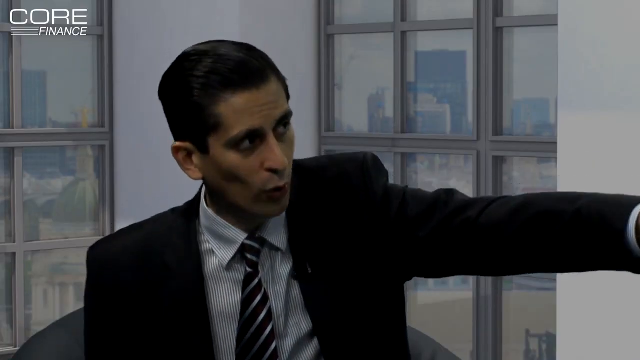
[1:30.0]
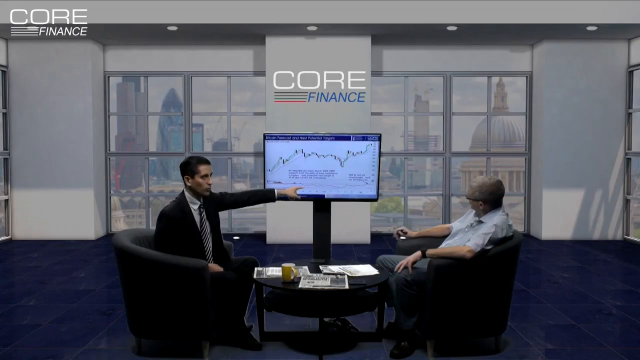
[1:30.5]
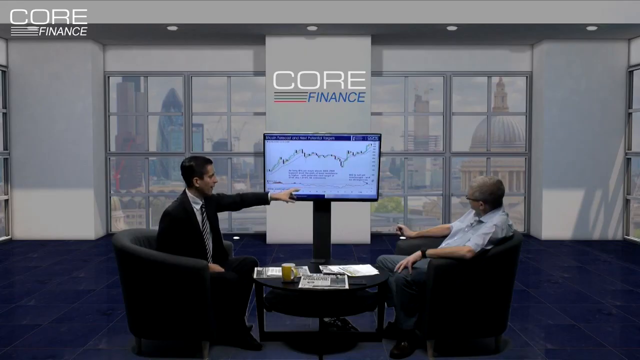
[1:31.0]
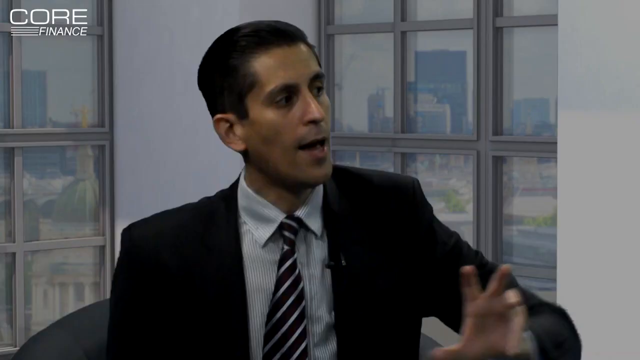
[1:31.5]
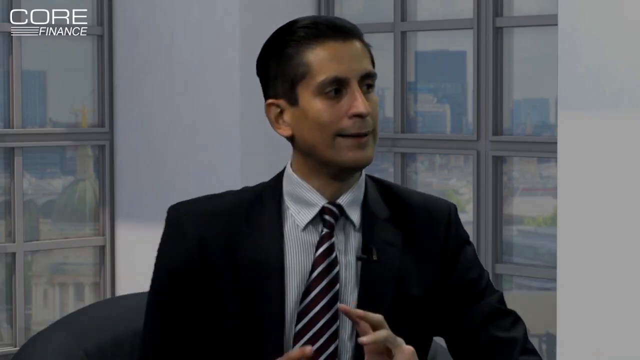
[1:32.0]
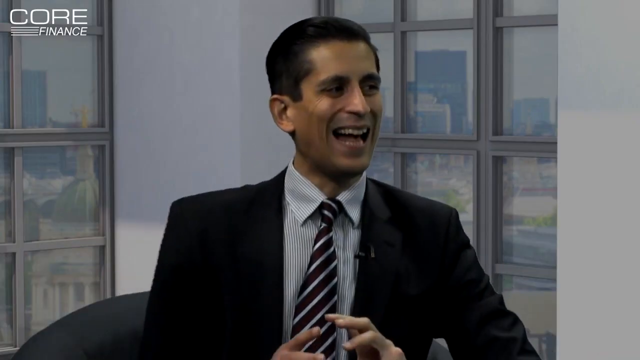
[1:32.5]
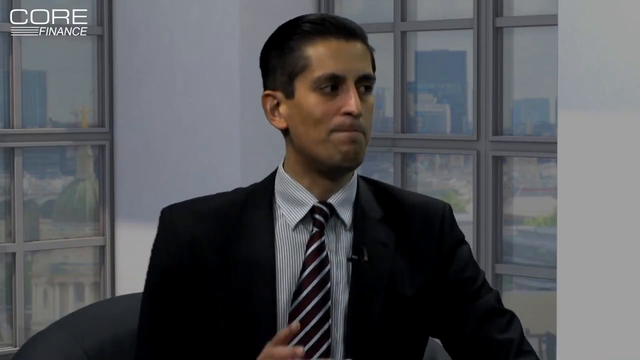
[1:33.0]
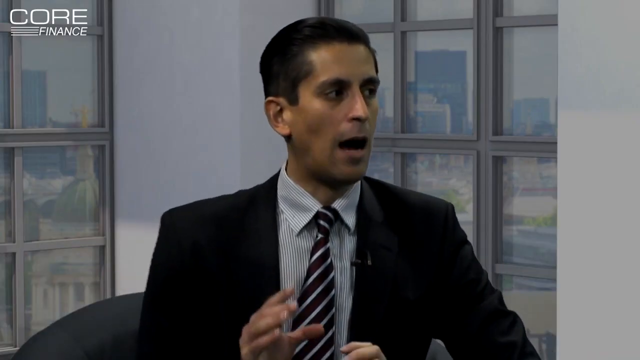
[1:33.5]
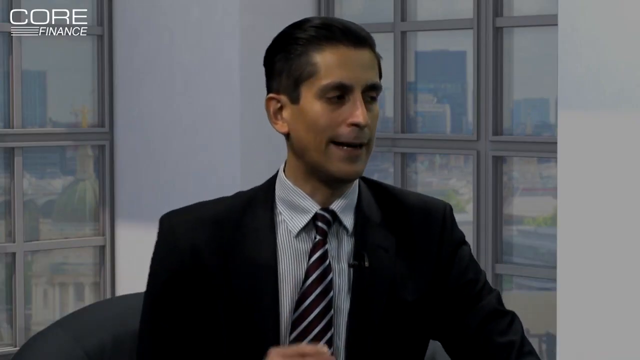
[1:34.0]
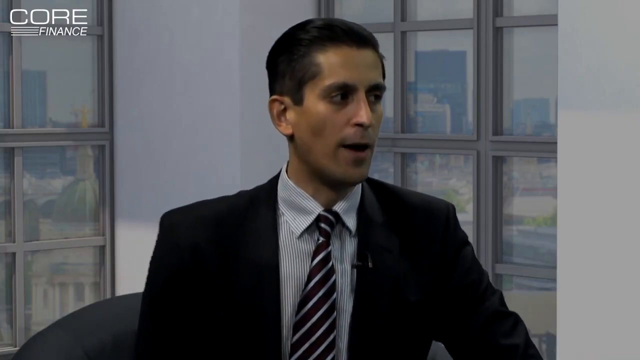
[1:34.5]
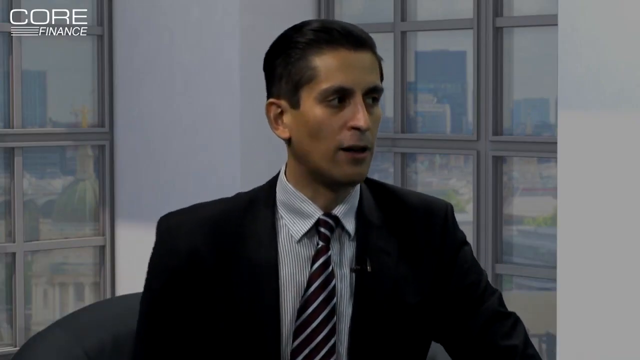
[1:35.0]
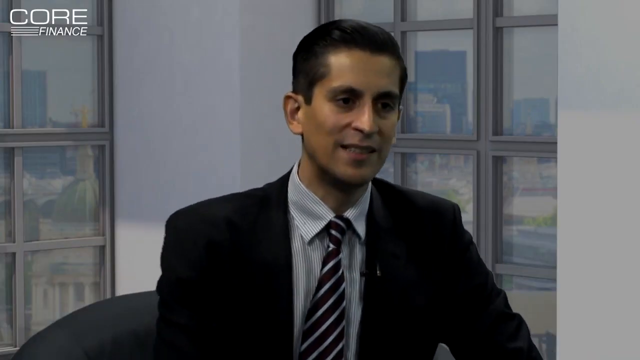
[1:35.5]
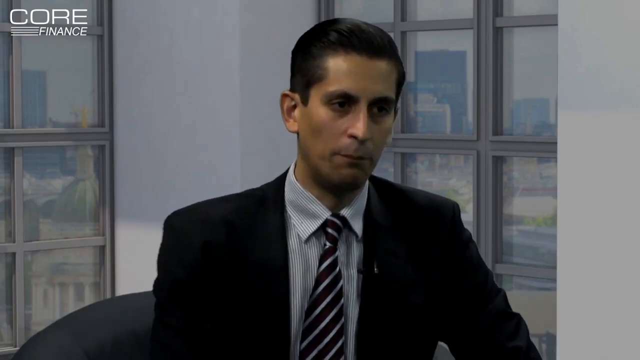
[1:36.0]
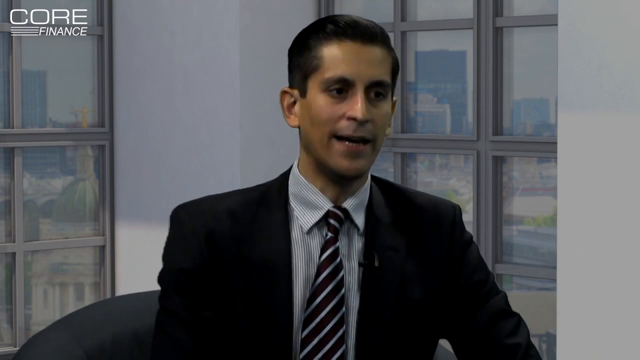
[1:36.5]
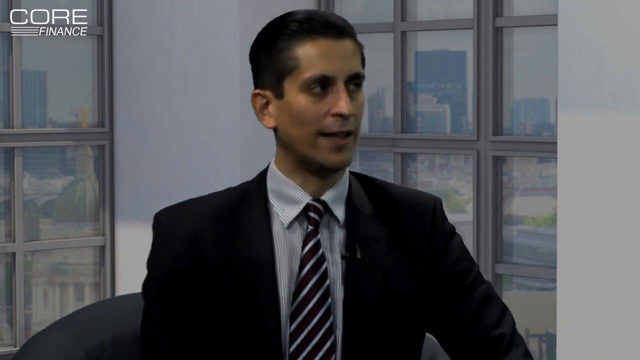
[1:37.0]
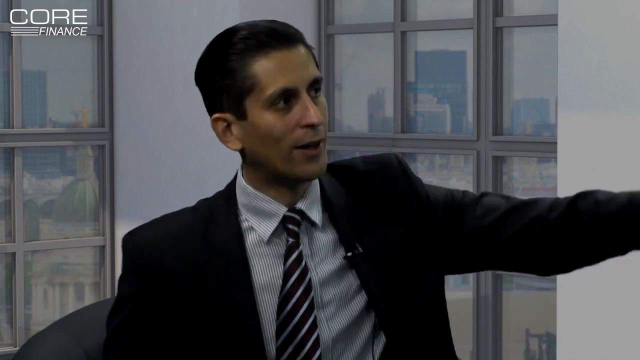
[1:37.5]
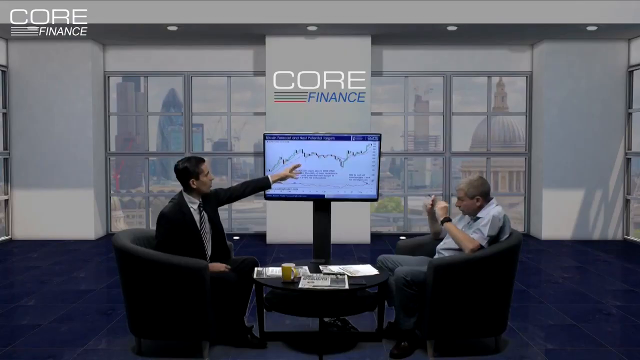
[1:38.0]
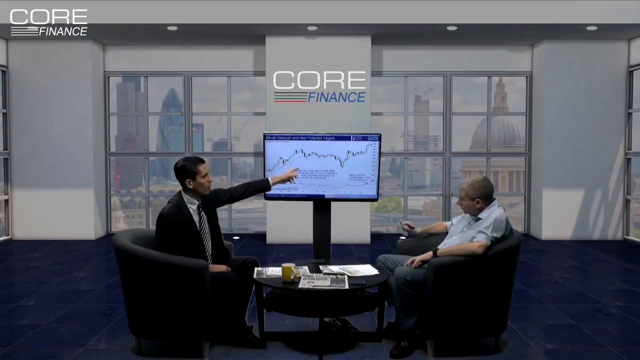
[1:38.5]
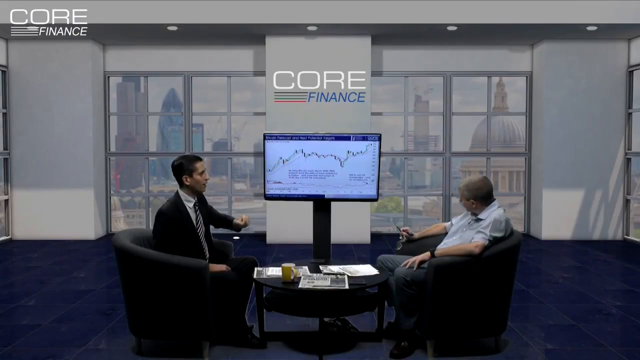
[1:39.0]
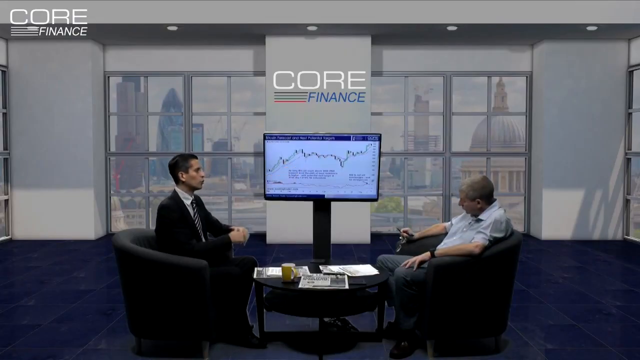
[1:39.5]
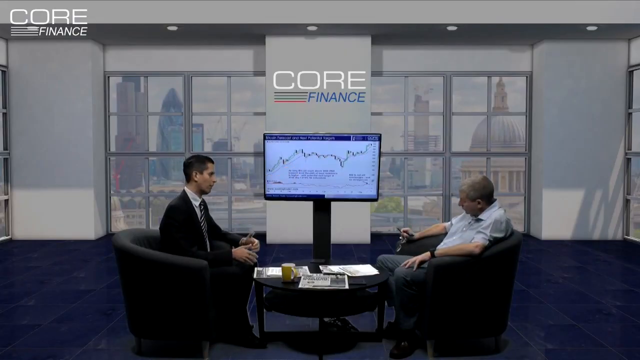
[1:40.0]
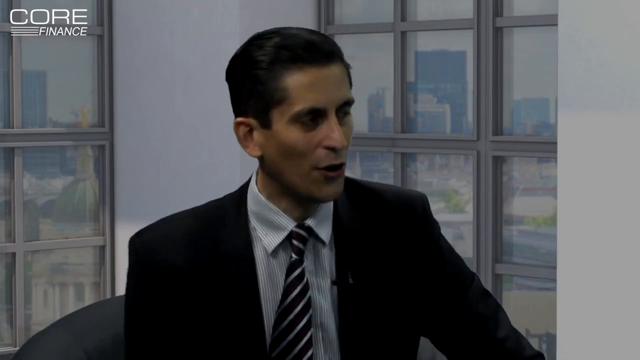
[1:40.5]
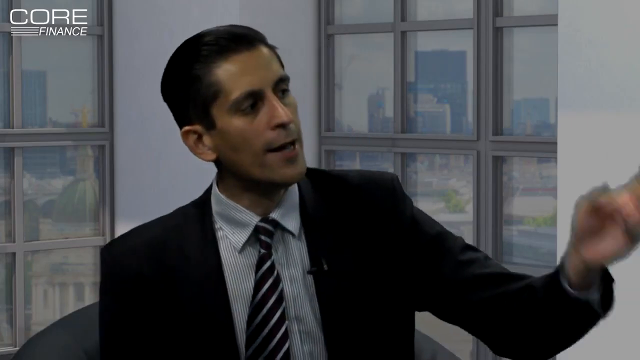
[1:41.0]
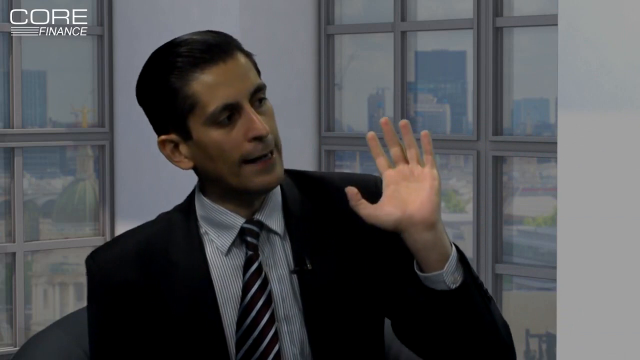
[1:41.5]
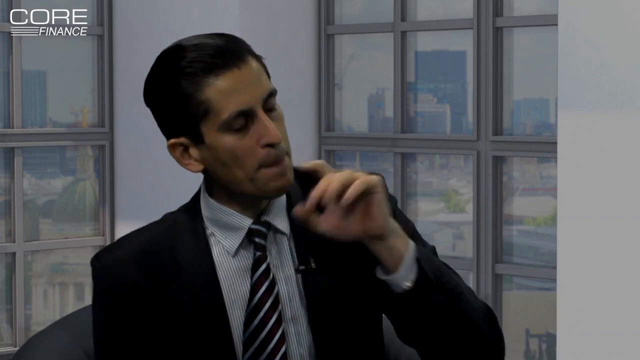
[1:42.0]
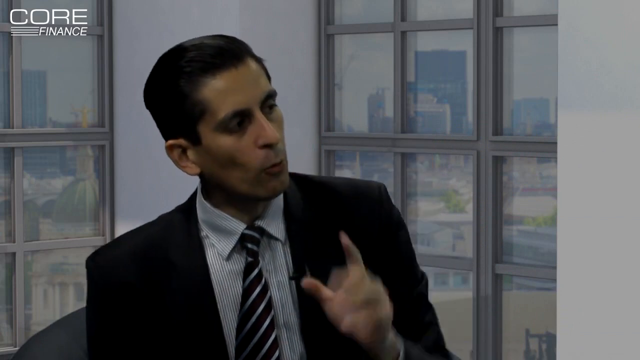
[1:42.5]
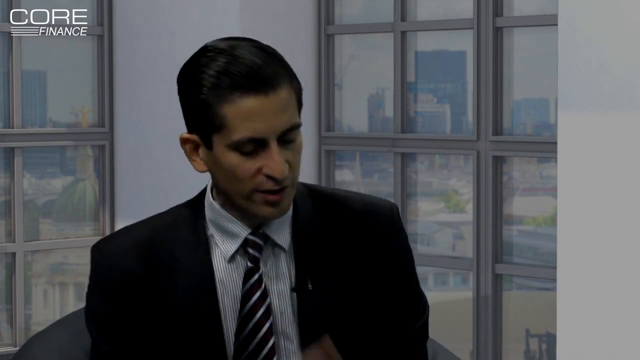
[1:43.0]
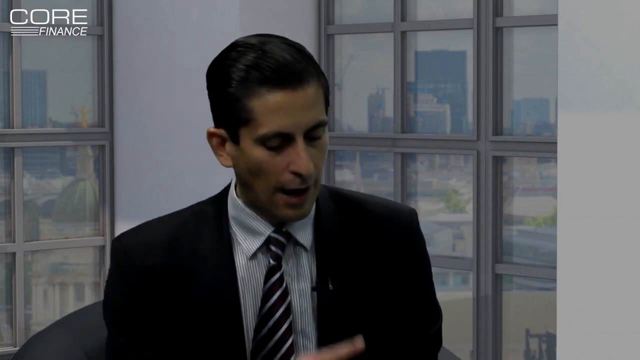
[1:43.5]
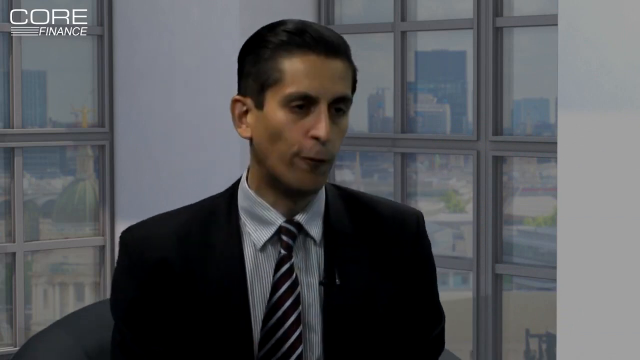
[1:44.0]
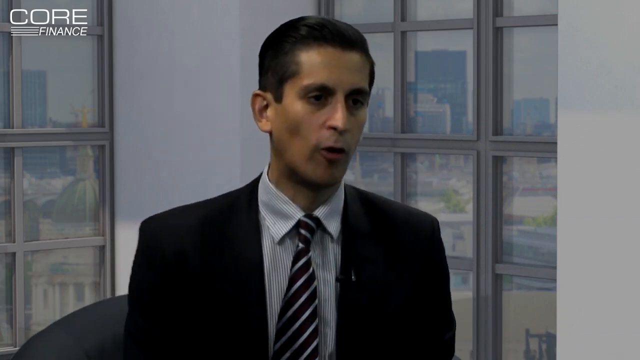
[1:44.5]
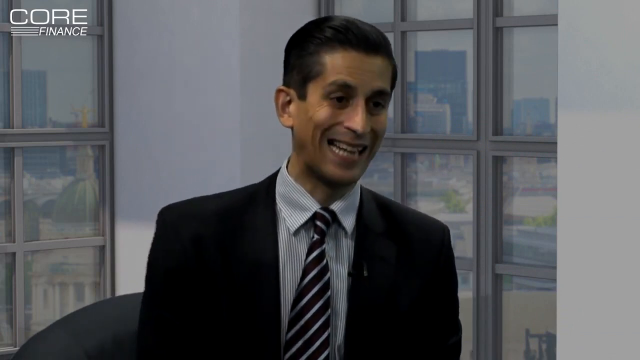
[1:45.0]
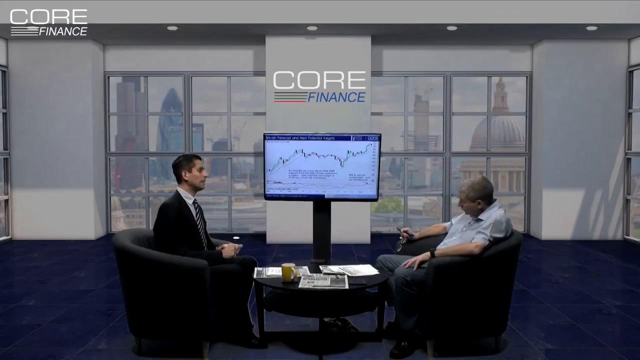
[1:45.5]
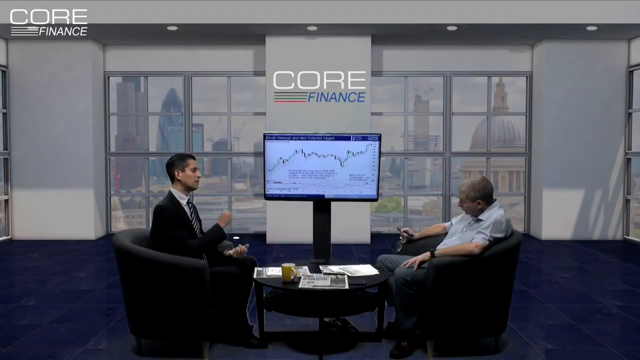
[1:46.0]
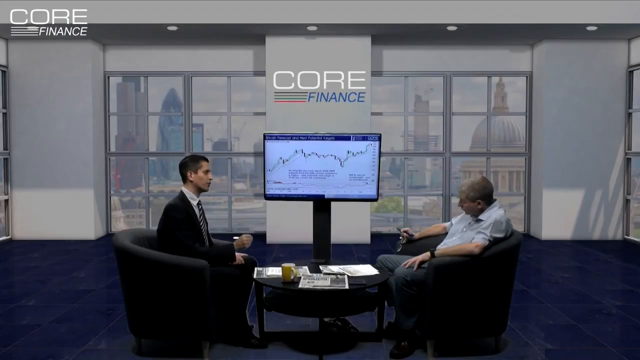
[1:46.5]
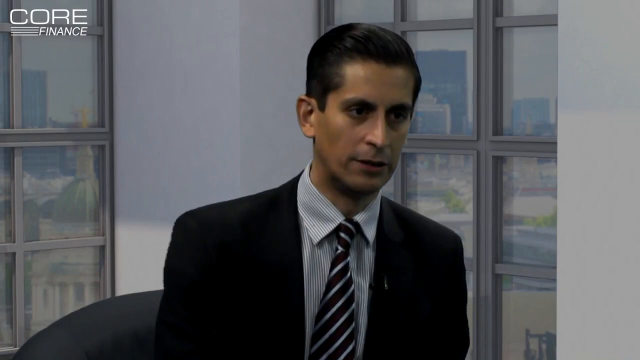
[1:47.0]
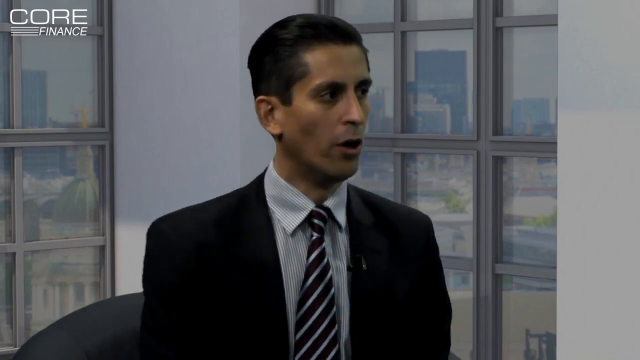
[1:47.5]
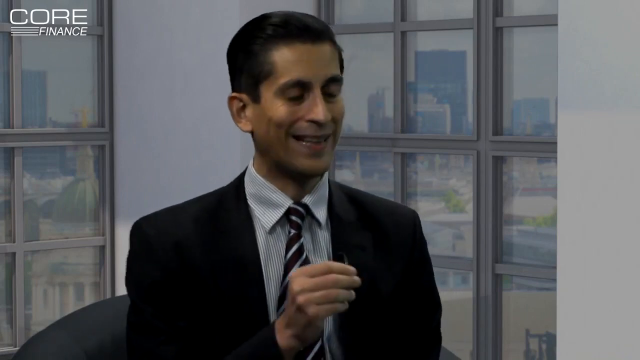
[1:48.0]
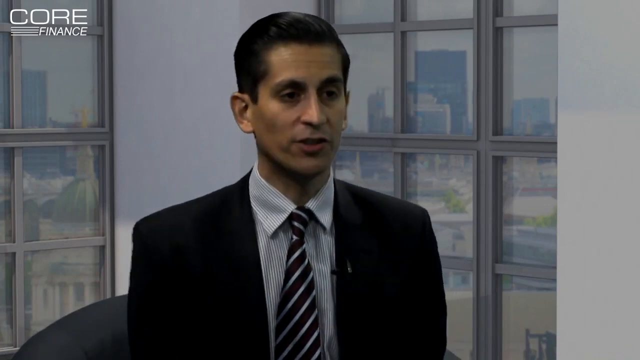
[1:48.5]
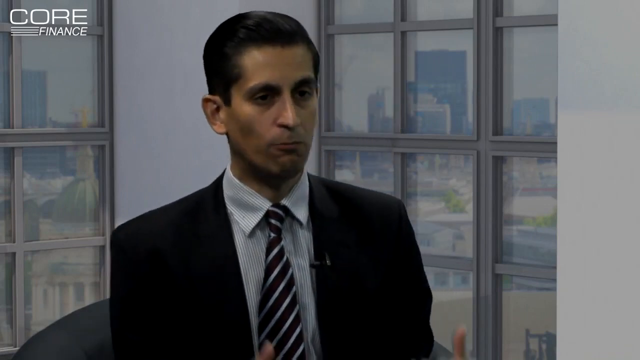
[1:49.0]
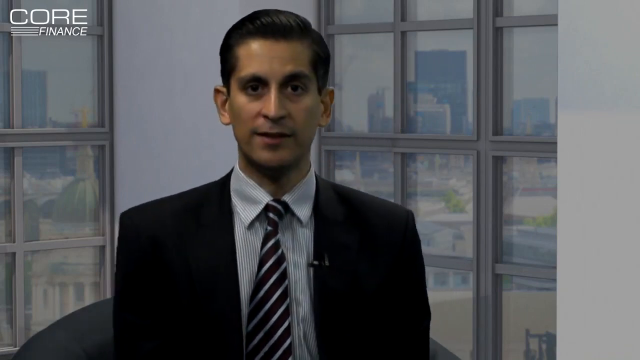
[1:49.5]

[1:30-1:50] The person in the suit points at the bitcoin chart while talking, keeping his hand there as if referencing something on it. He wears a black tie with diagonal white lines, and the other person wears a white t-shirt with black vertical stripes. The man in the black suit, who has black silky hair, talks and gestures with his hand, while the person on the right has slightly grey hair. The person on the right, the one shown at the beginning, has taken off his prescription glasses and holds them in his right hand. The mic of the person in the black suit is clipped on his suit, and its reflection is slightly visible. The tiny mics are black portable mics.